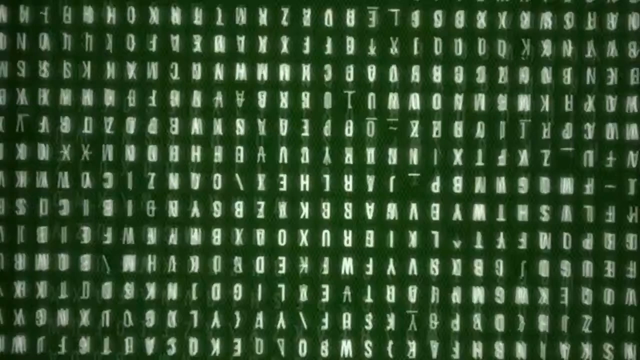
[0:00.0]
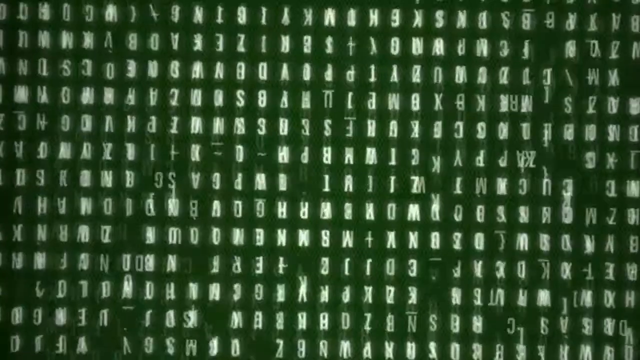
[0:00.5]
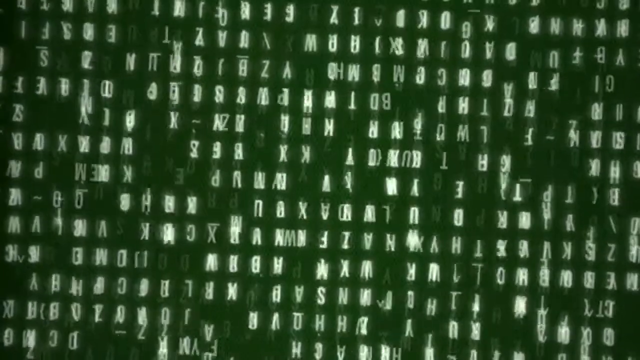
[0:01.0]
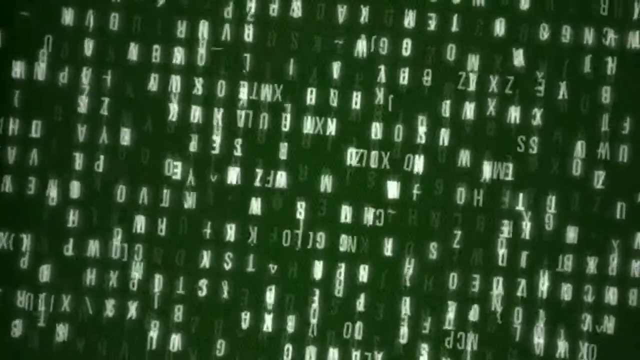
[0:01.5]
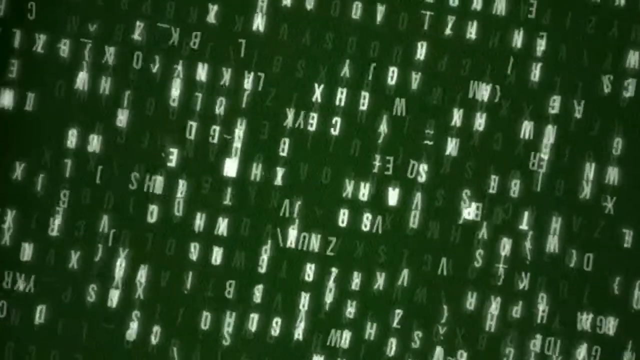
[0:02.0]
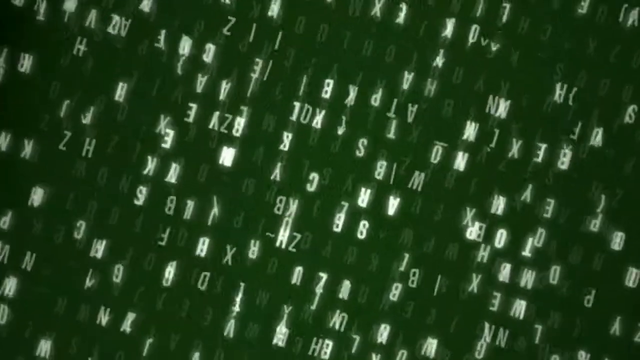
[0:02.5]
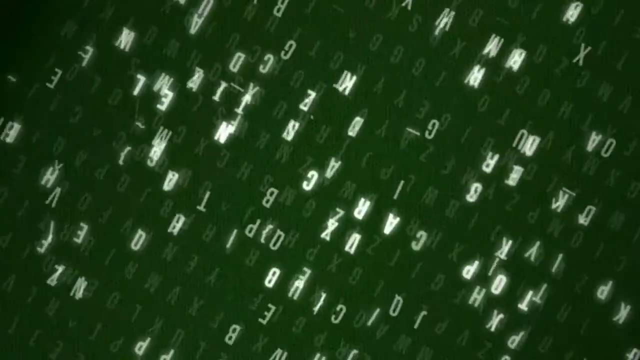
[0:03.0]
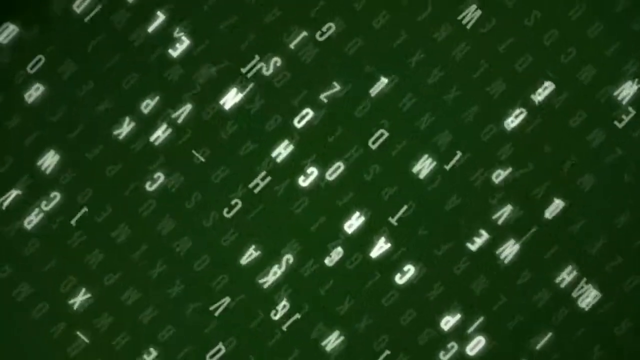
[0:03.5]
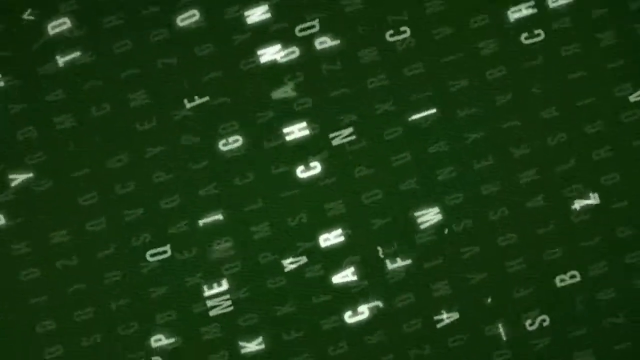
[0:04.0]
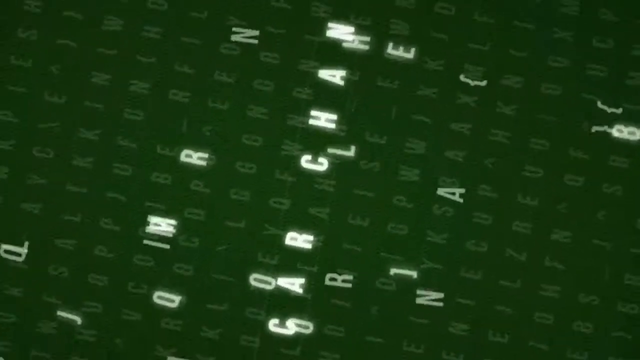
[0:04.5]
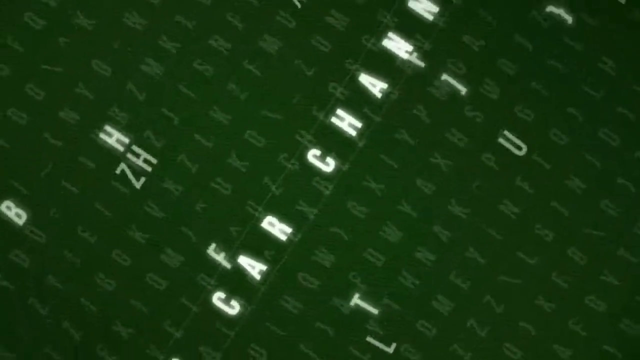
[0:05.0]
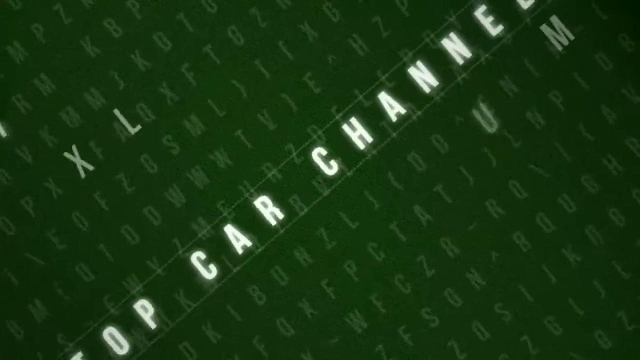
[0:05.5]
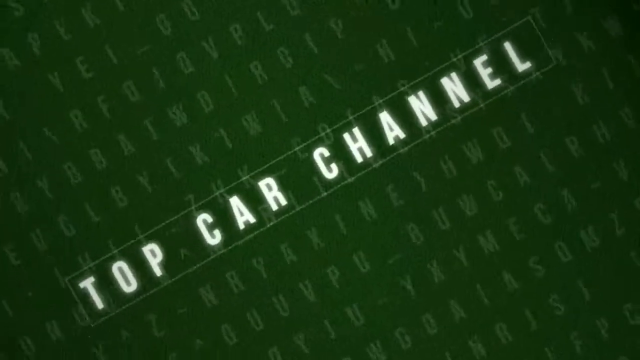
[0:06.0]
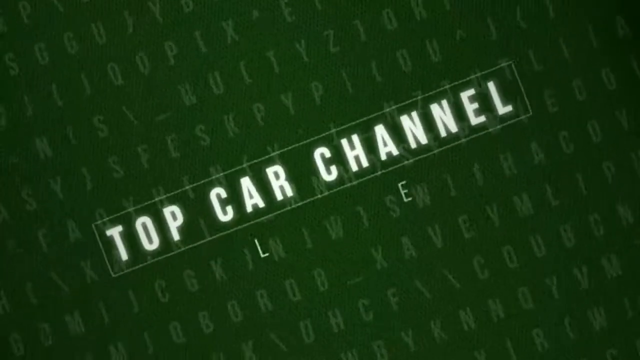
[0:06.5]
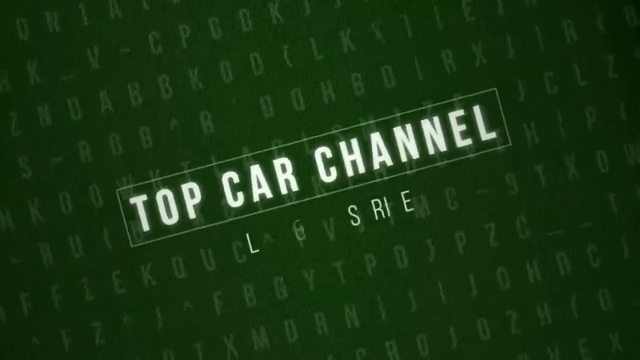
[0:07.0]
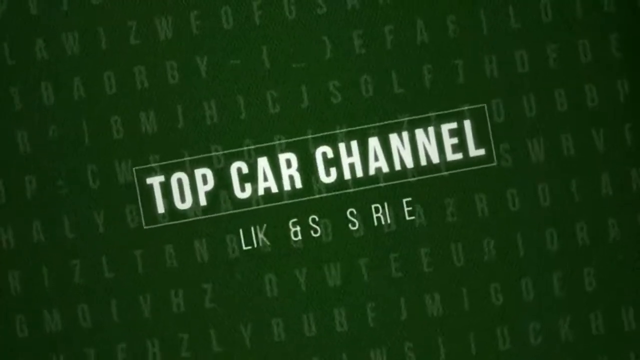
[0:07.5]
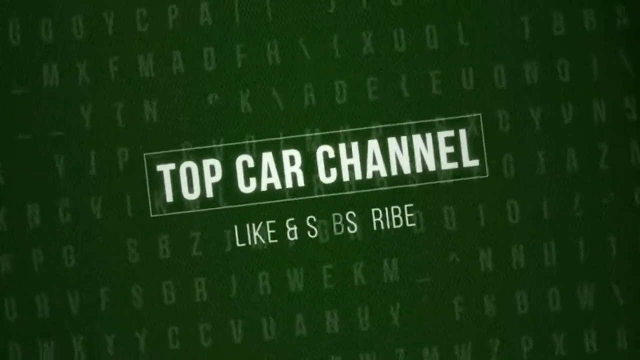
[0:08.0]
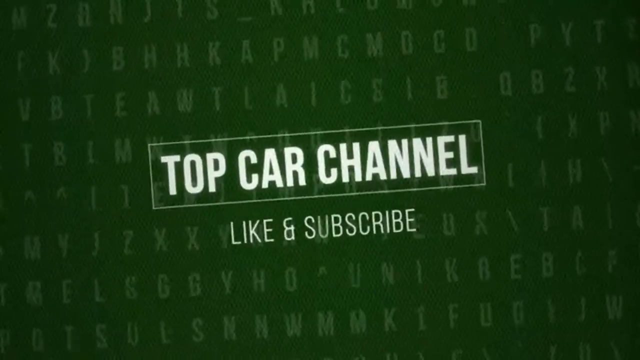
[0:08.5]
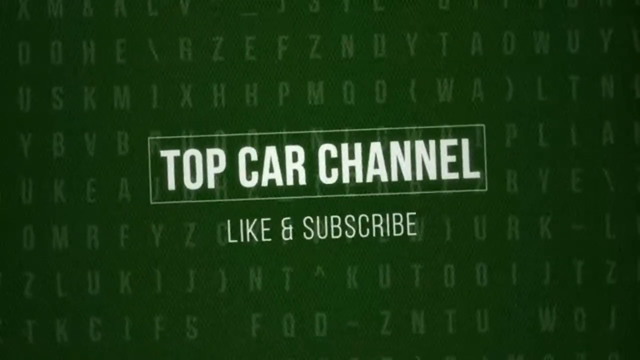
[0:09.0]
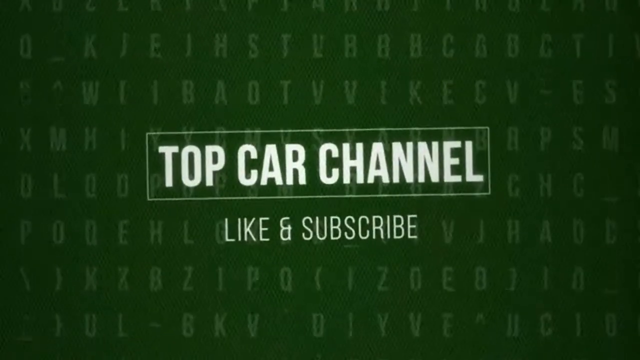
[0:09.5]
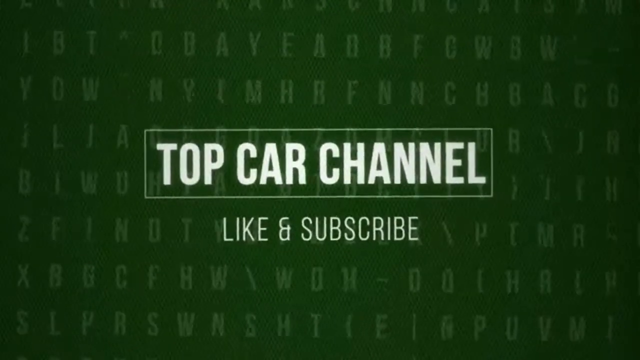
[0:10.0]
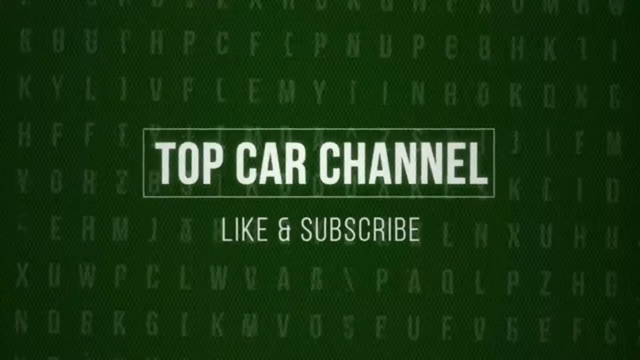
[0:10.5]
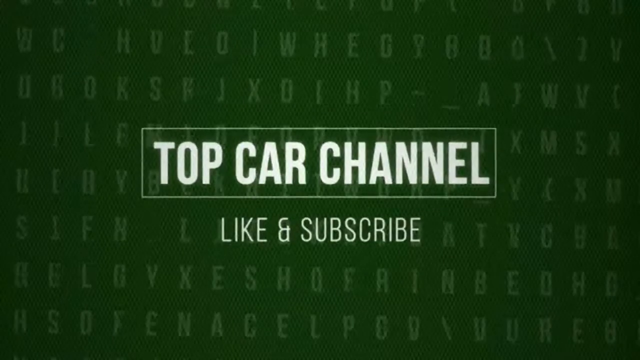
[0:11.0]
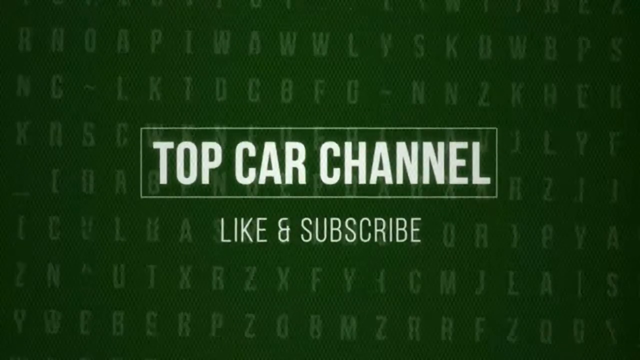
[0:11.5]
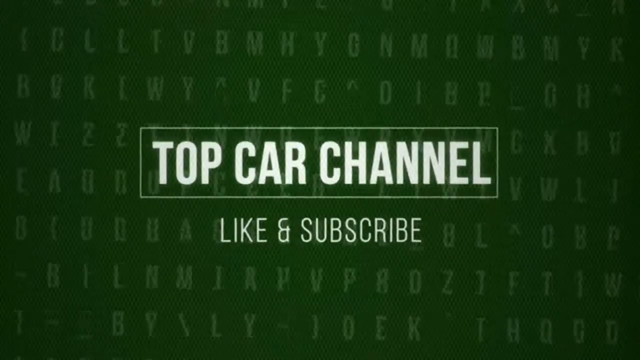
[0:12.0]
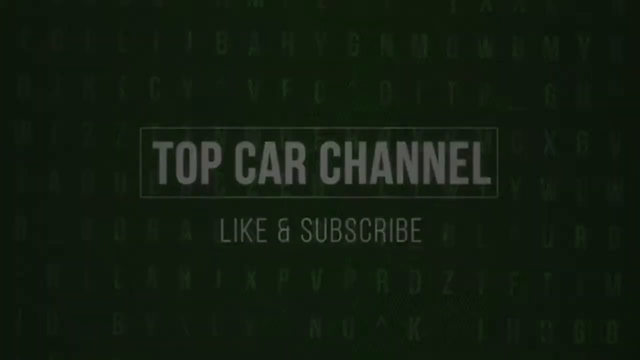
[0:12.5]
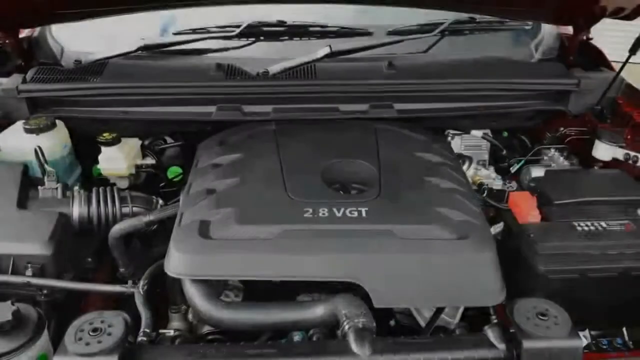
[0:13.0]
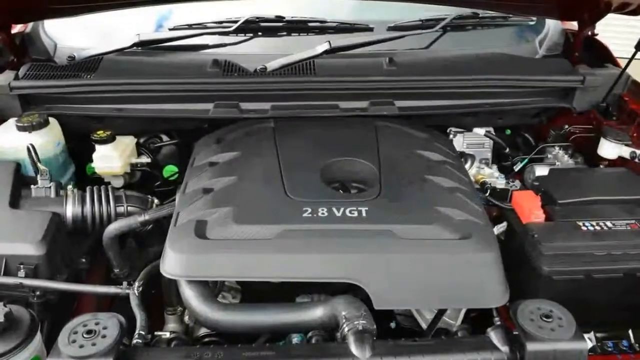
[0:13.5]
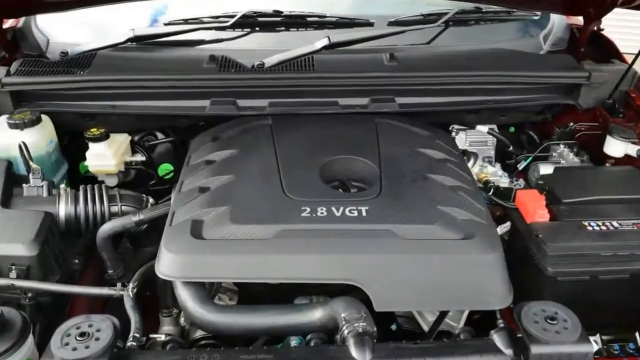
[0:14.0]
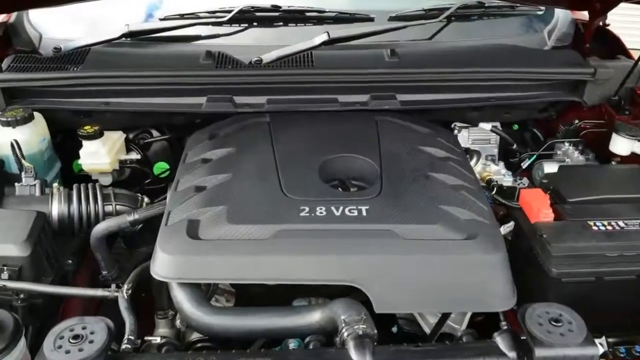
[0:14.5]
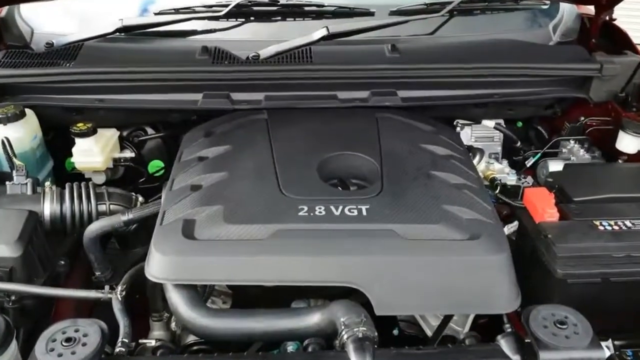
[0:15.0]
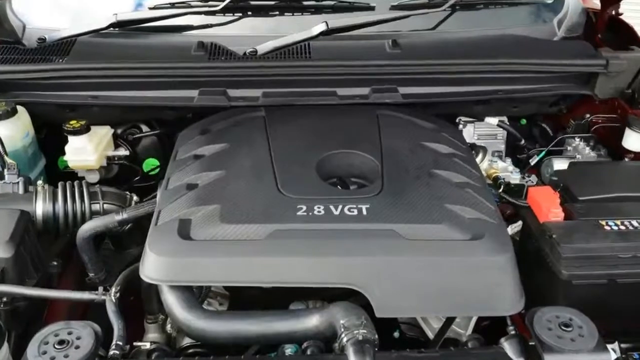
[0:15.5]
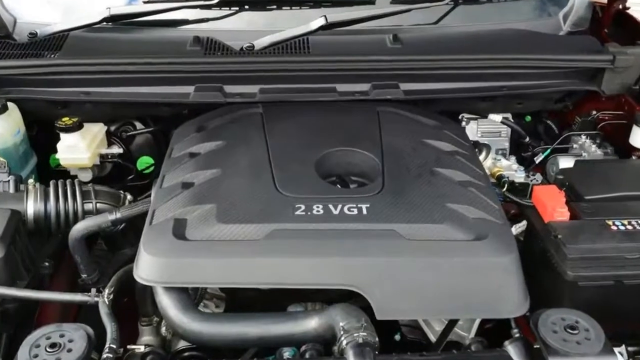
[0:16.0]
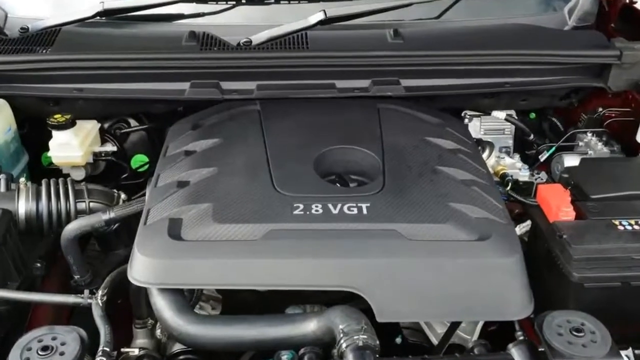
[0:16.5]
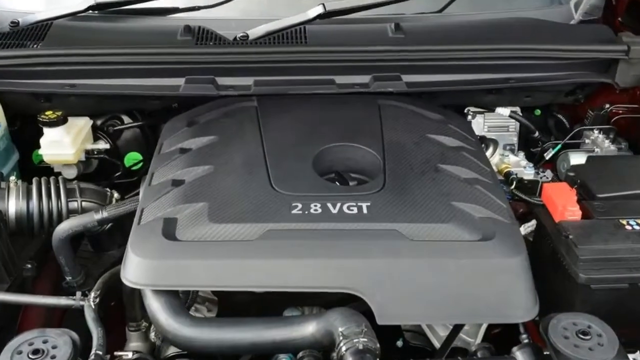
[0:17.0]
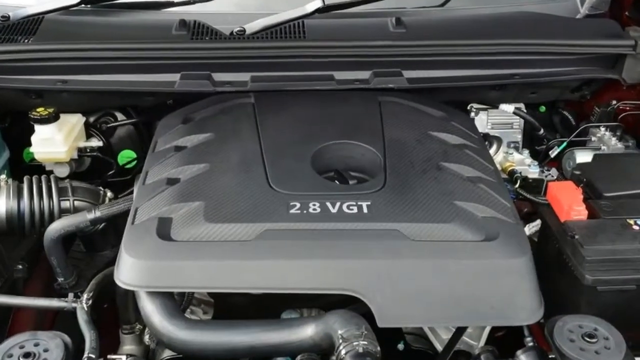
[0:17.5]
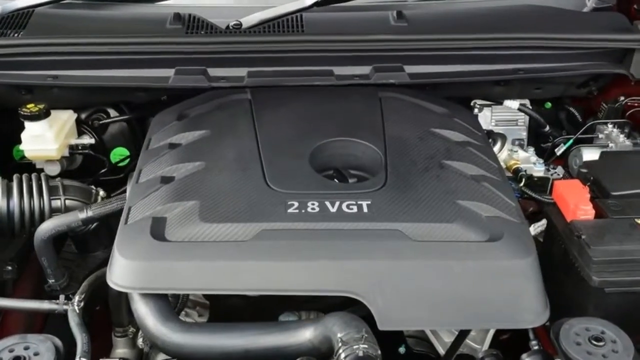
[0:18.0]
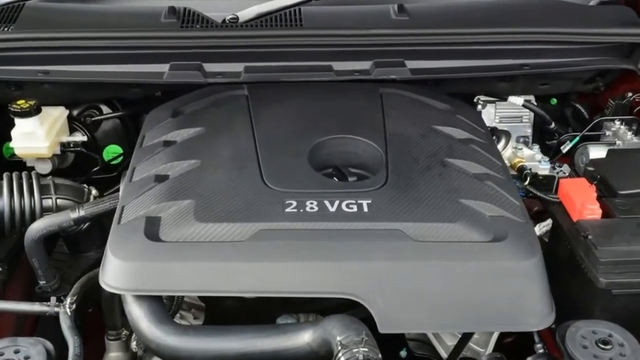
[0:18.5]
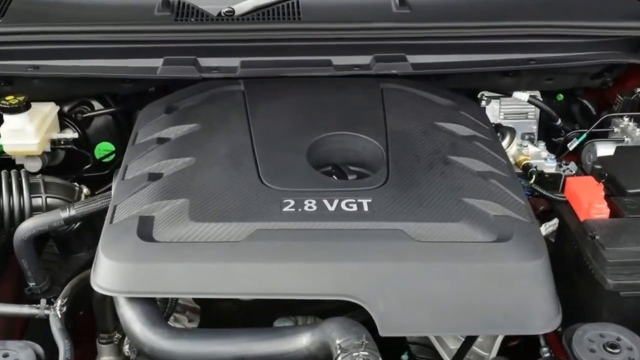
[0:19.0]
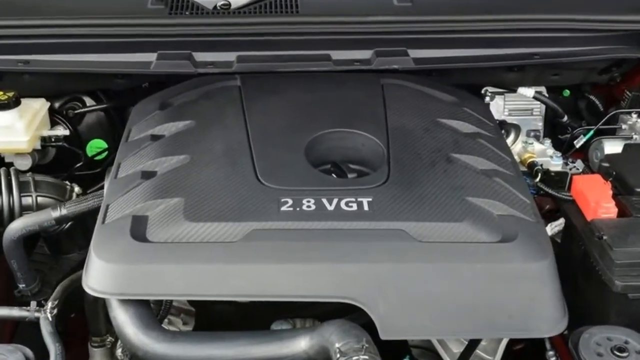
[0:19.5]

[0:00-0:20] Against a black background, backwards digital letters in a greenish color fill the screen, and some of the letters start to disappear. The page does a full 180 flip, and the words come together to read "top car channel," with "like and subscribe" underneath. A 2.8 VGT engine is then shown inside a vehicle; the engine is covered in what looks like a gray plastic cover. Off to the right is a reddish orange cap area, along with some wires connecting to what looks like a battery in that area. On the left there is a green button area, plus something like a cylinder hose coming out of the engine.